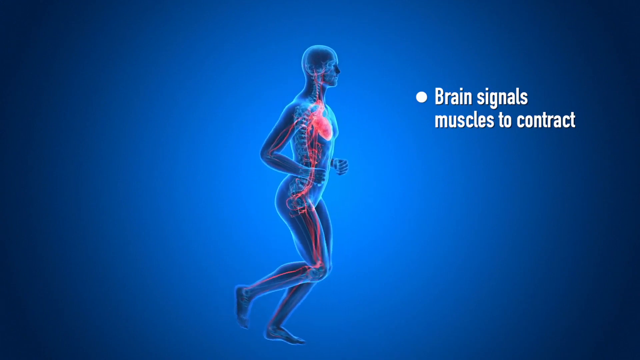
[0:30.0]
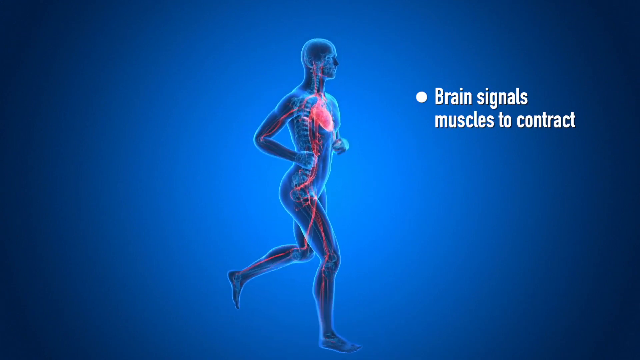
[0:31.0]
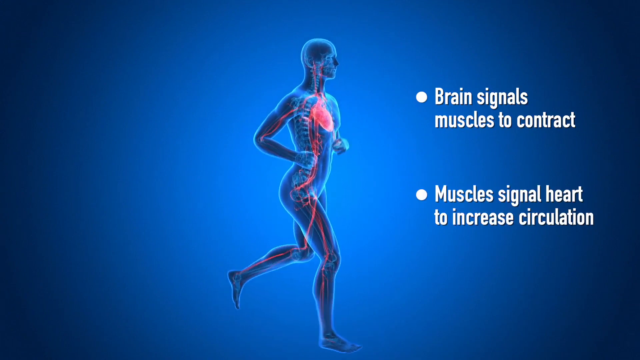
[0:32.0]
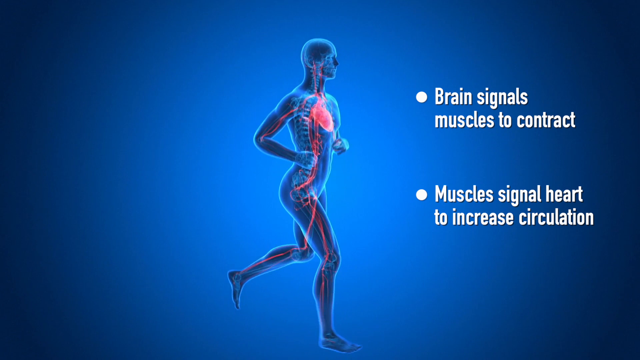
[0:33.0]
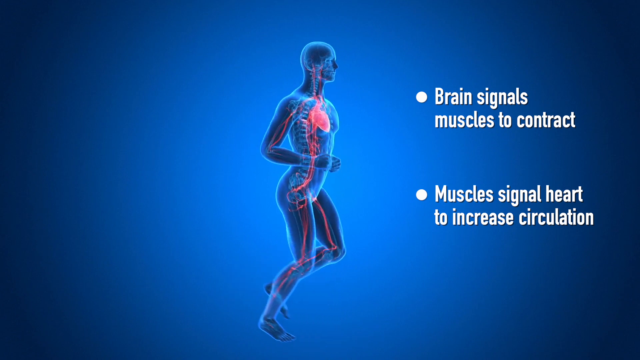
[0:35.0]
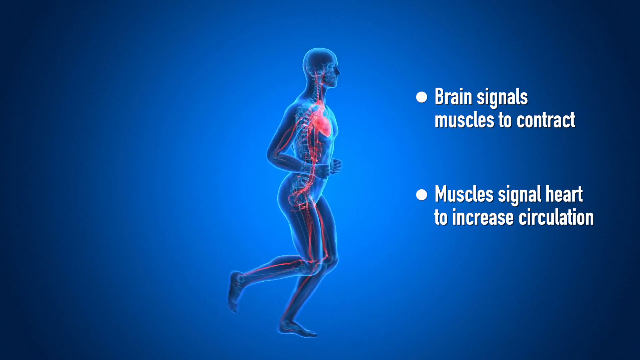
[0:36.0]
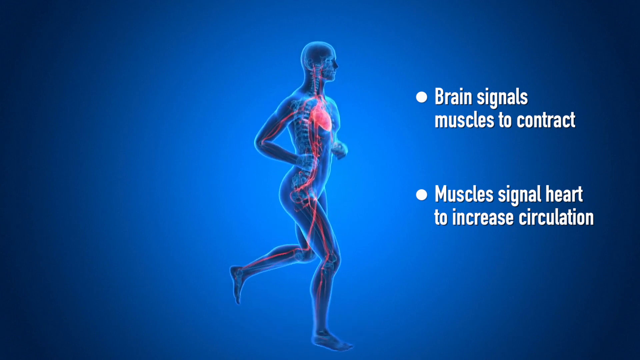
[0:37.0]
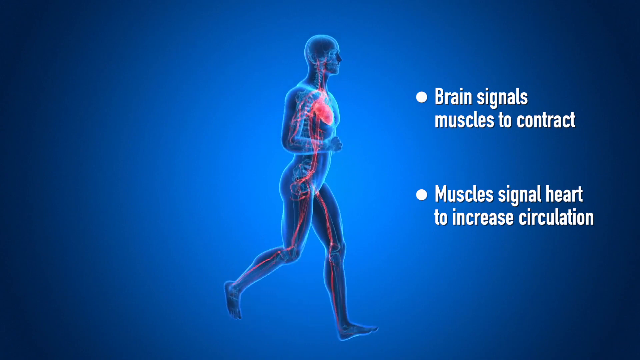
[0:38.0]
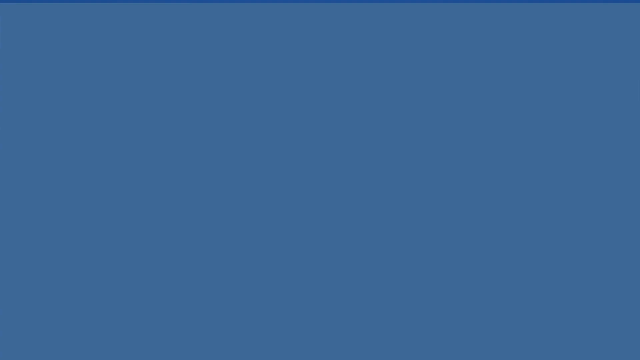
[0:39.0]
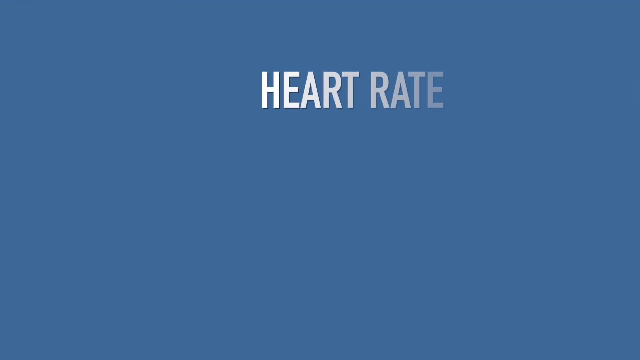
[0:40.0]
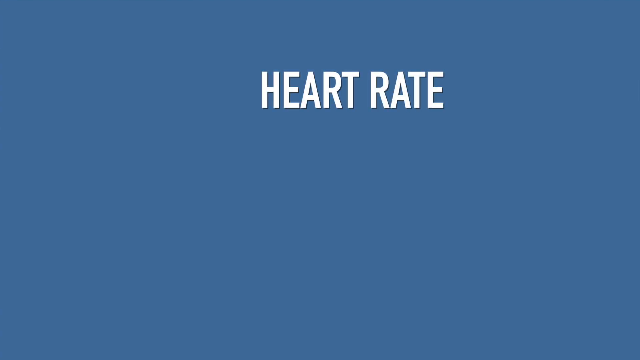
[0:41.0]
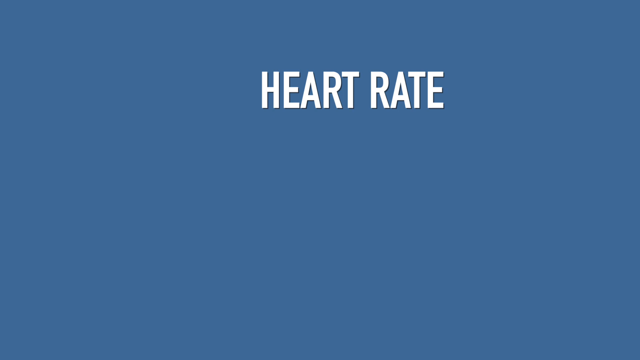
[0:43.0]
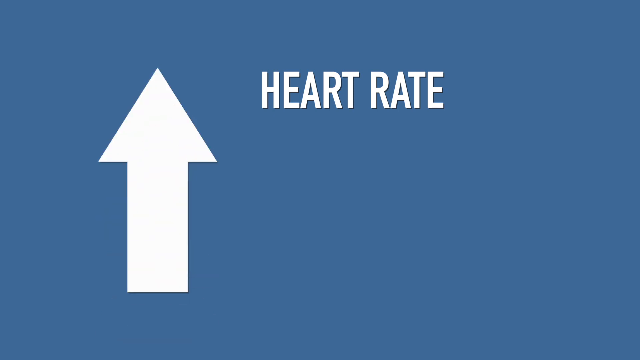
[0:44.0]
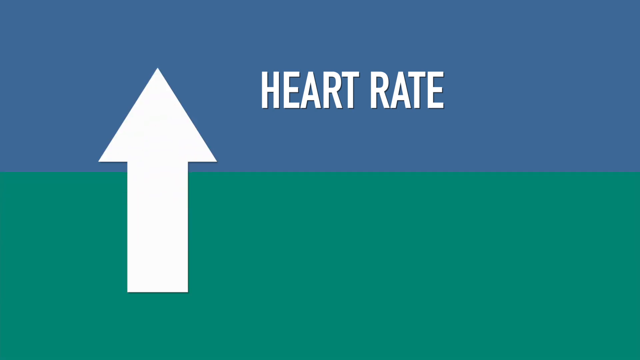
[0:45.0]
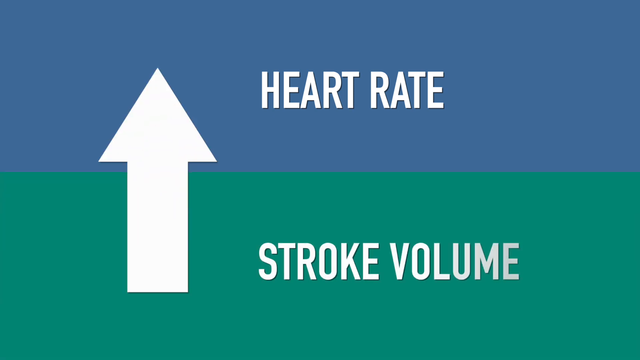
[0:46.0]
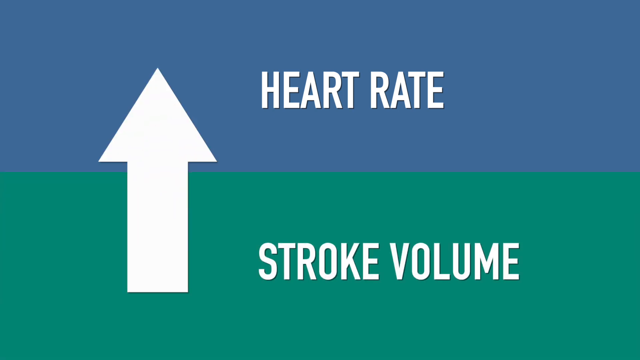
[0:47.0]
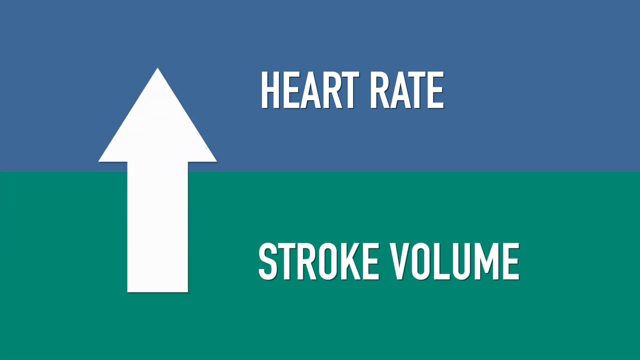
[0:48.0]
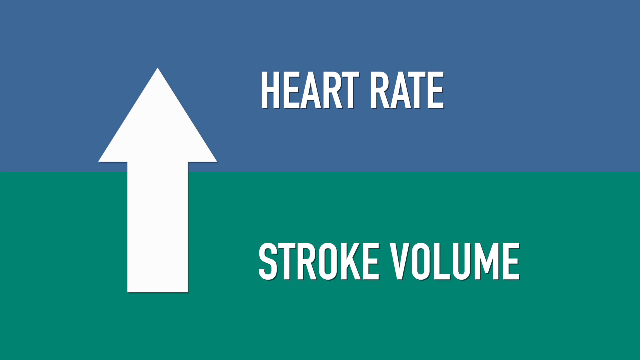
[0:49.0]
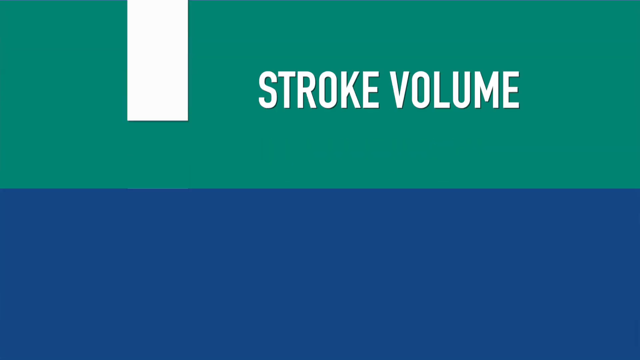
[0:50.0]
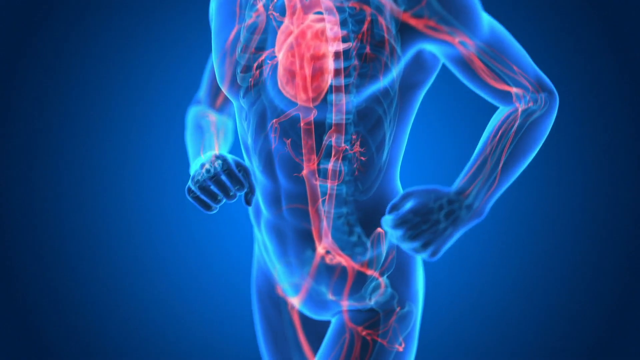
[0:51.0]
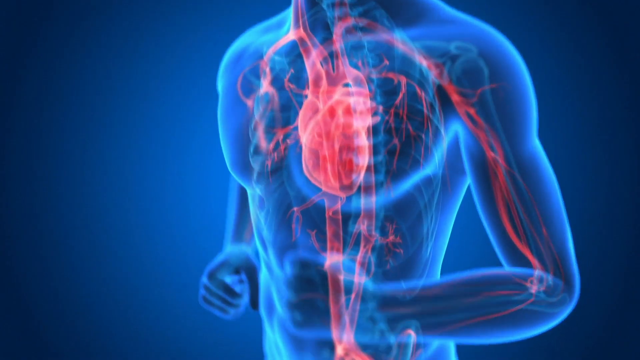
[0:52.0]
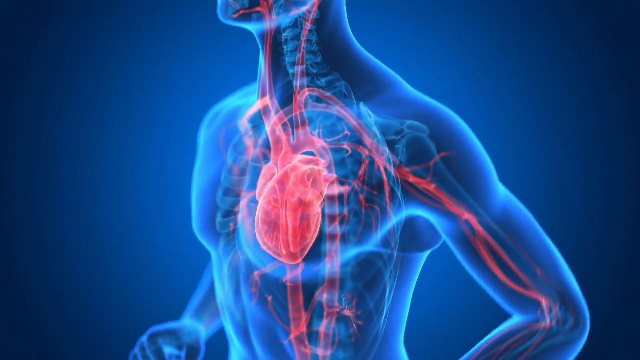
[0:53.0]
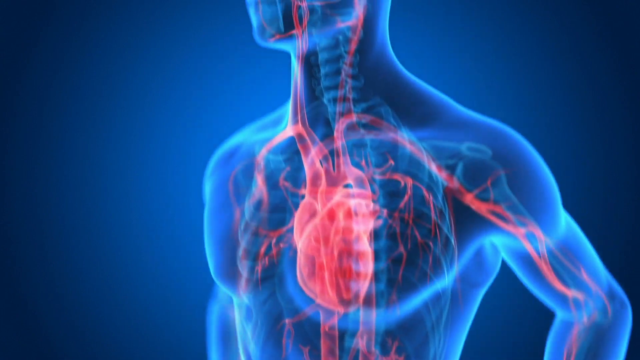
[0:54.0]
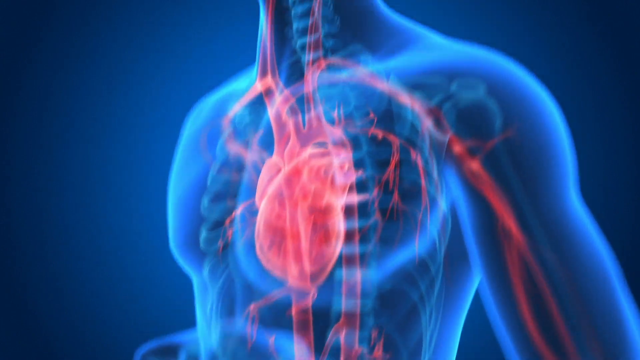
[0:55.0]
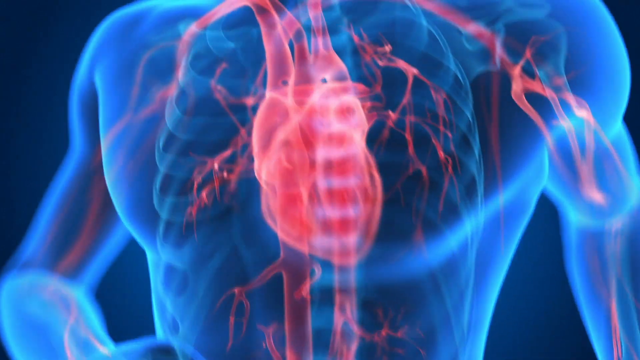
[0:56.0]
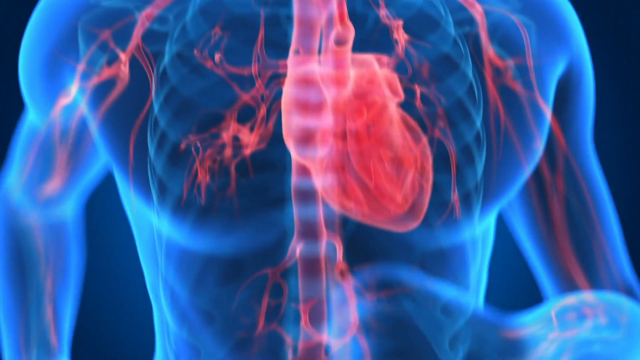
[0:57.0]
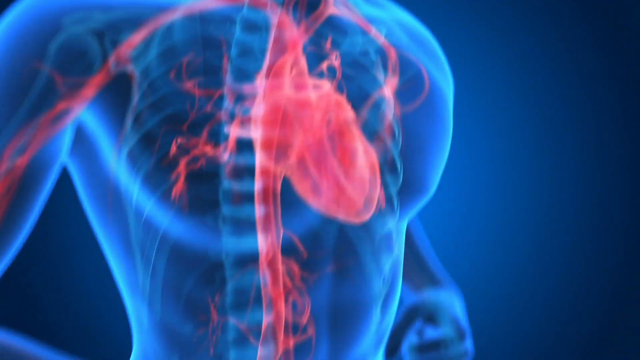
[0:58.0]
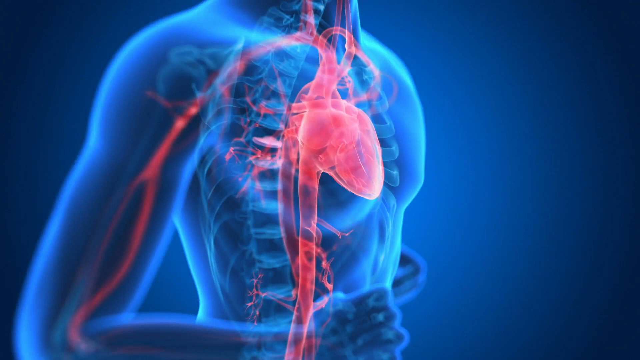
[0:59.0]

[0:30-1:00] A computer-generated image of a man appears, seen in an x-ray-like way that reveals his organ systems as well as the heart and vascular system. The brain area is highlighted in green, and a bullet point appears to the right of the image reading "brain signals muscles to contract", followed by a second bullet point, "muscle signal heart to increase circulation". The presentation then moves to a blue screen with "heart rate" in white font and an arrow shooting upward, after which the screen splits in half, blue at the top and green at the bottom. The video then returns to the person running, with the heartbeat visible through the x-ray image.